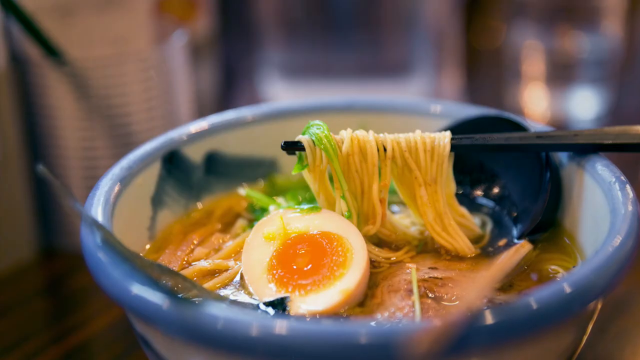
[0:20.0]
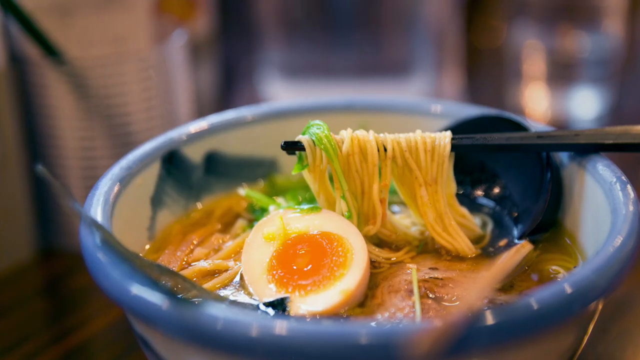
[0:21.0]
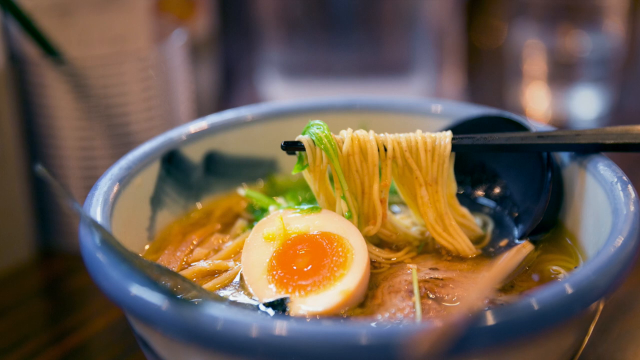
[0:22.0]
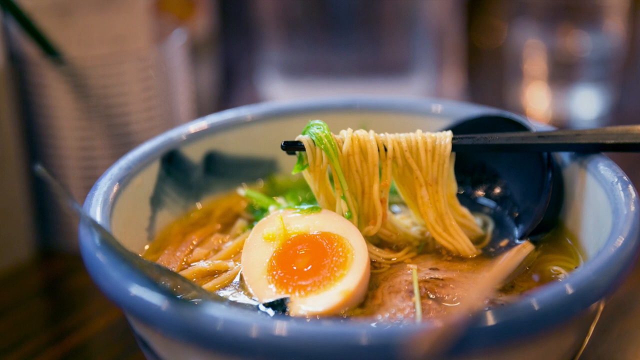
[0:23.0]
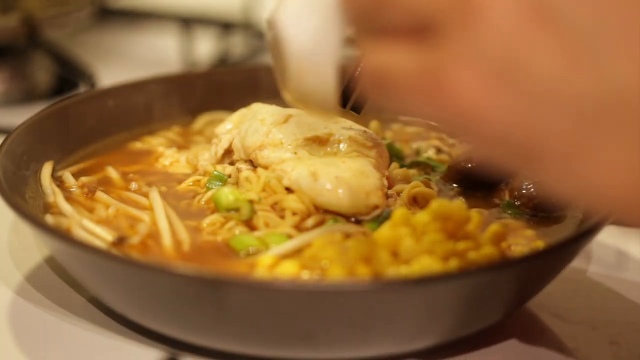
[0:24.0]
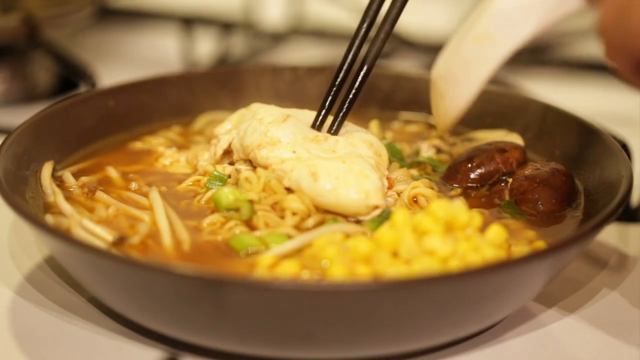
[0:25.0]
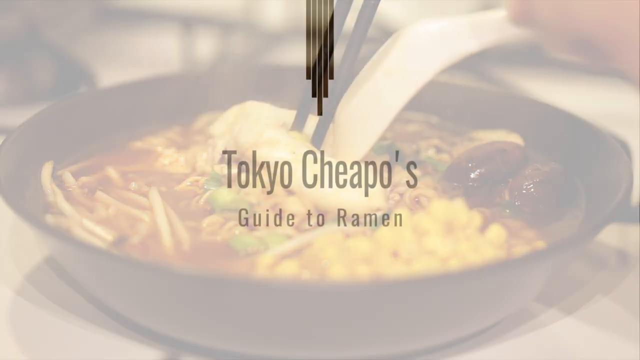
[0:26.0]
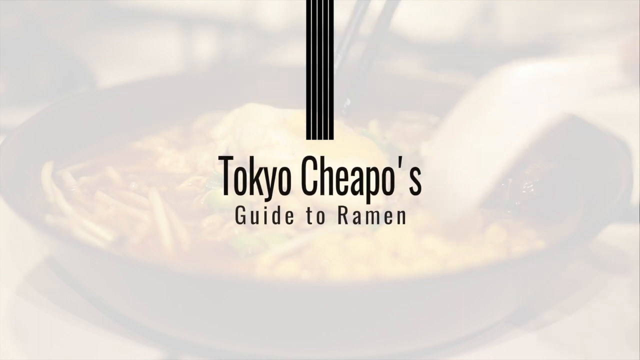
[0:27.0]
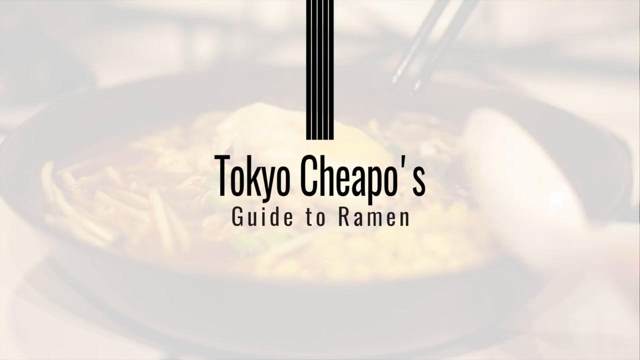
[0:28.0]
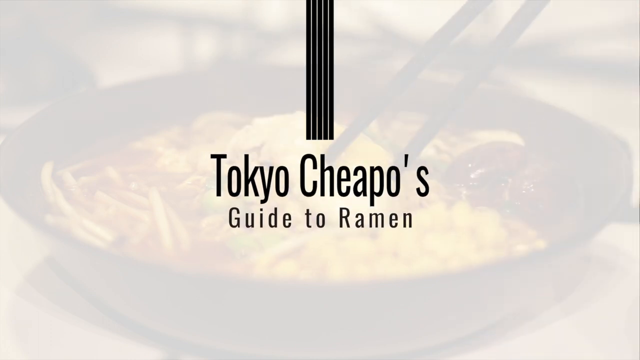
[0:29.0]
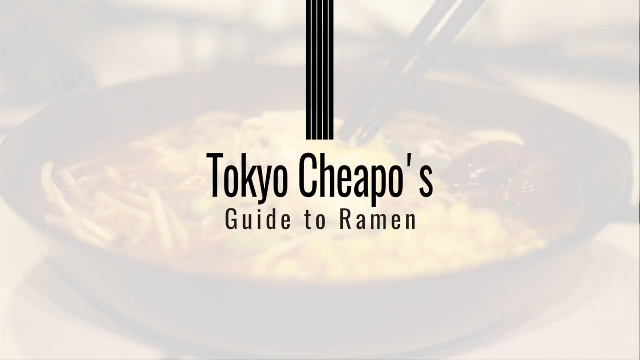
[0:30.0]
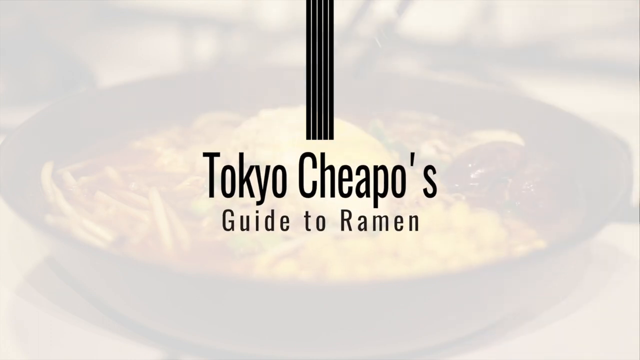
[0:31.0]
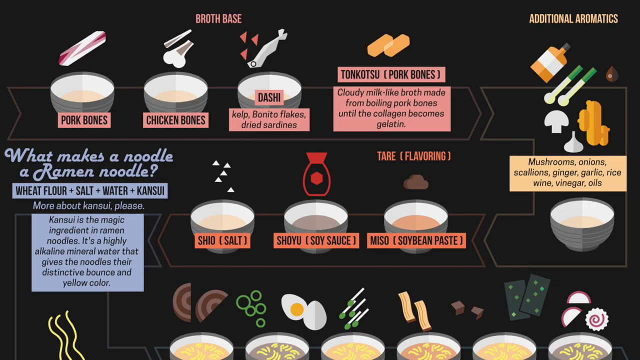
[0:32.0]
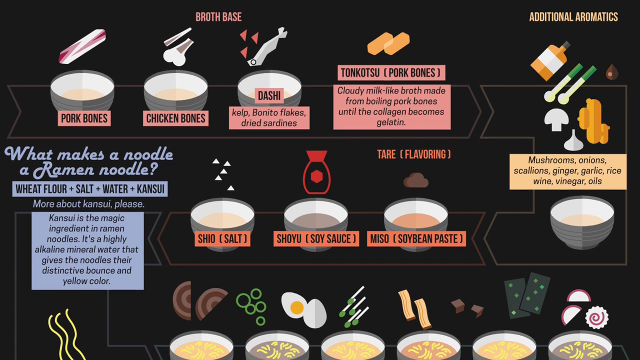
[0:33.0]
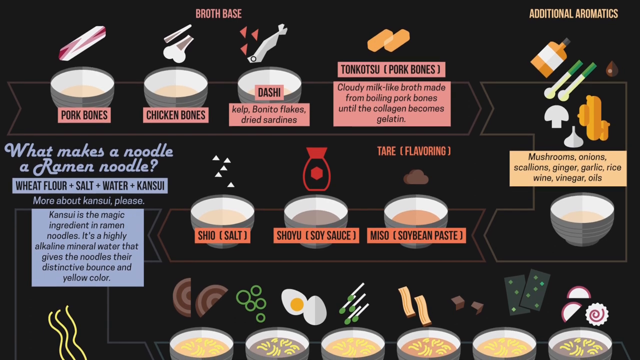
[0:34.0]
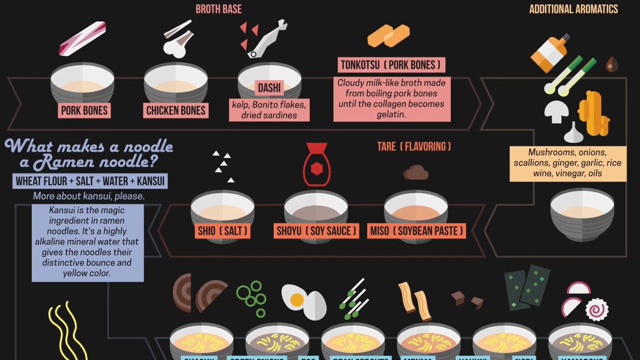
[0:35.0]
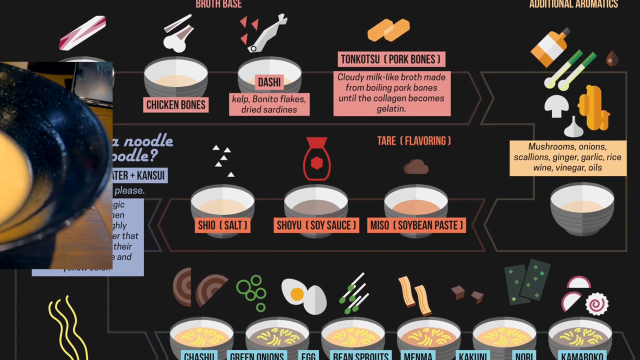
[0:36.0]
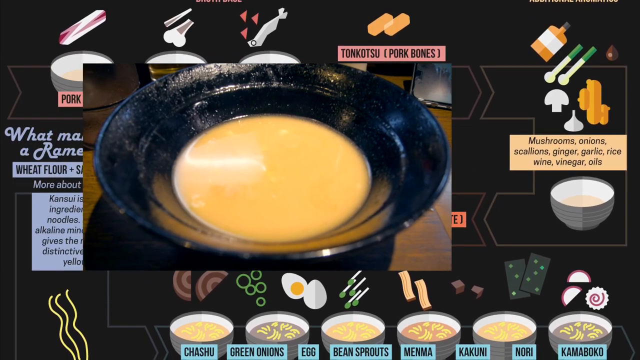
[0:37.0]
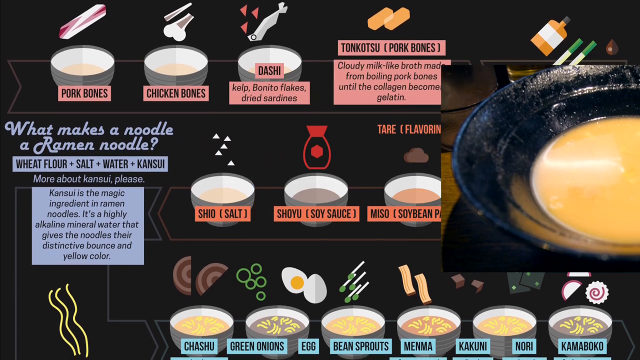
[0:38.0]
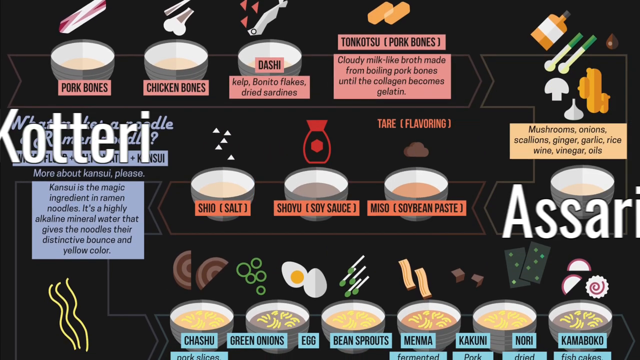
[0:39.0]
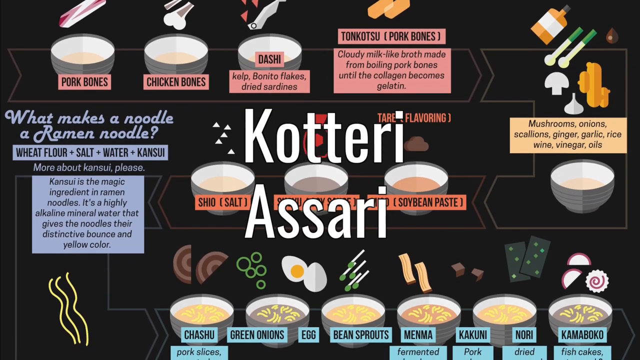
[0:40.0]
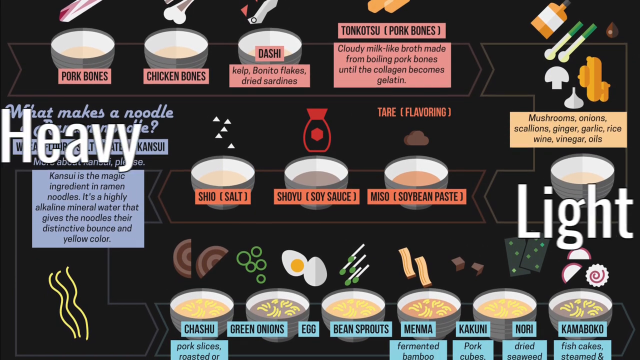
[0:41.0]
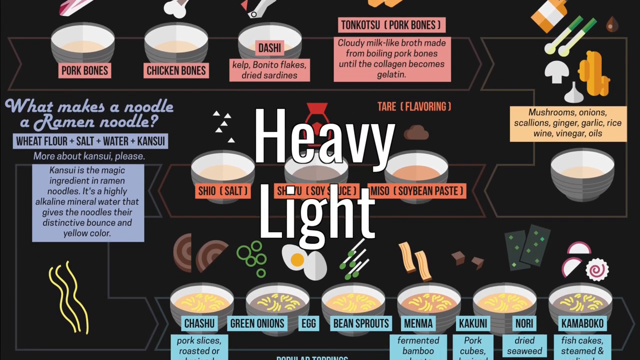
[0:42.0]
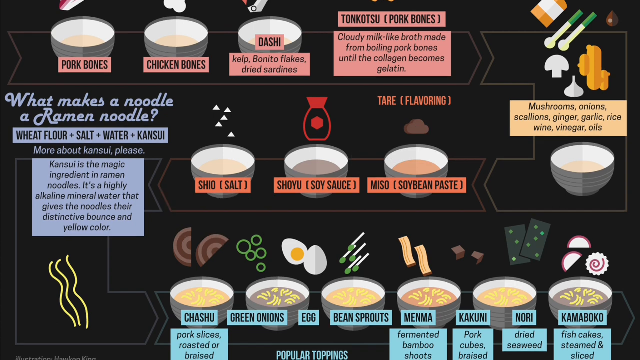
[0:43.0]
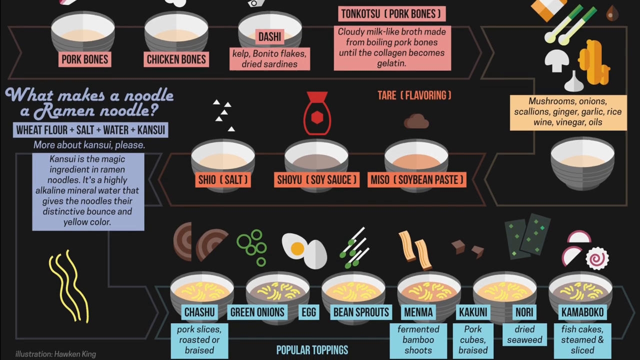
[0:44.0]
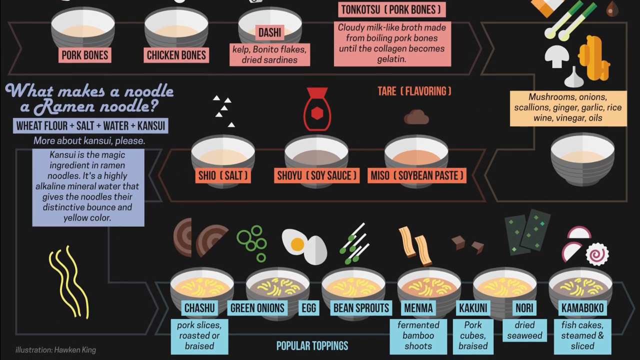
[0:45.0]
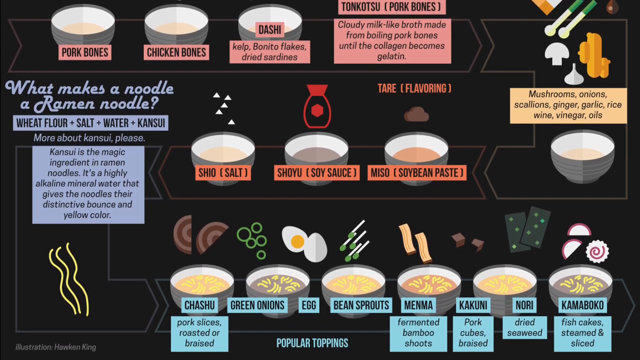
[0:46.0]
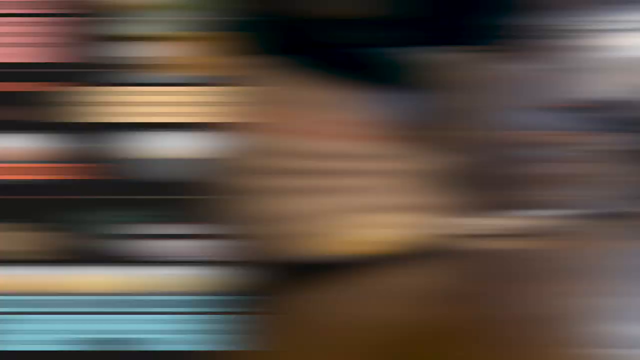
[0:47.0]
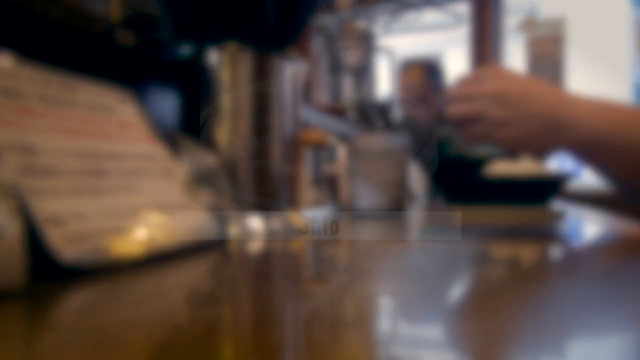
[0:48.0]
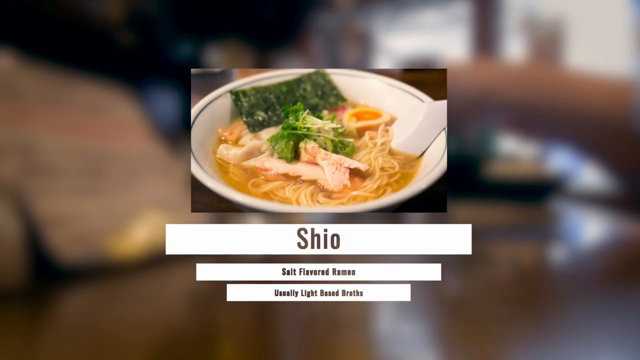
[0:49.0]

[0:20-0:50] An image of ramen switches to another image of ramen in which a person with chopsticks and a spoon puts them into the bowl of ramen. An image of Tokyo Cheapo's guidance then appears on the screen, with five black stripes at the top of the screen going down vertically. The next screen shows the process of making a good ramen, under "What makes a noodle a ramen noodle?" It says the broth base is the first step: pork bones, chicken bones, dashi (kelp, bonito flakes, dried sardines), and tonkotsu, a cloudy, milk-like broth made from boiling pork bones until the collagen becomes gelatin. On the top right, the next step is additional aromatics: mushrooms, onions, scallions, ginger, garlic, rice wine, vinegar and oils. There are arrows. The third step is flavoring, with three types: miso (soybean paste), shoyu (soy sauce) and shio (salt). The screen also describes kansui, the magic ingredient in ramen noodles, a highly alkaline mineral water that gives the noodles their distinctive bounce and yellow color.